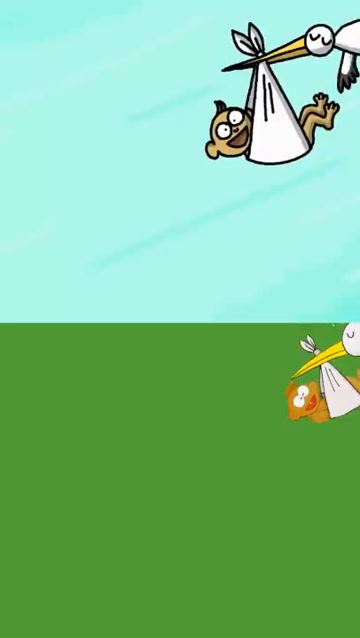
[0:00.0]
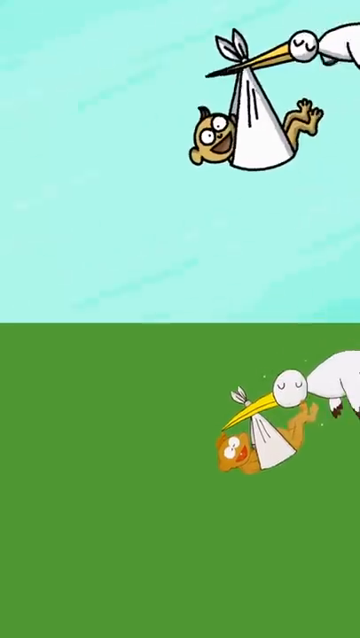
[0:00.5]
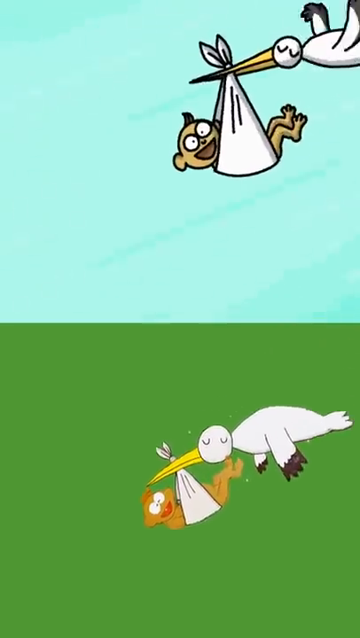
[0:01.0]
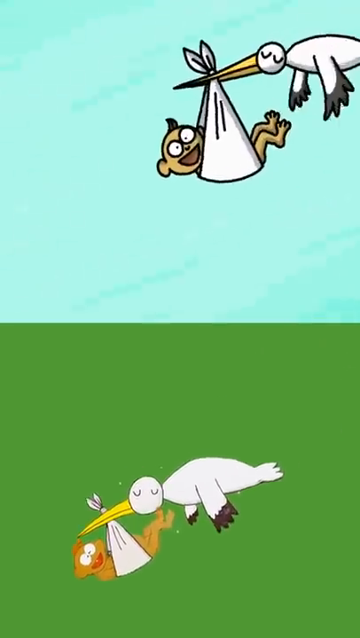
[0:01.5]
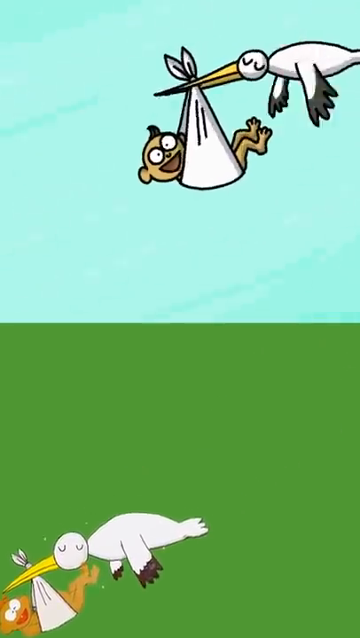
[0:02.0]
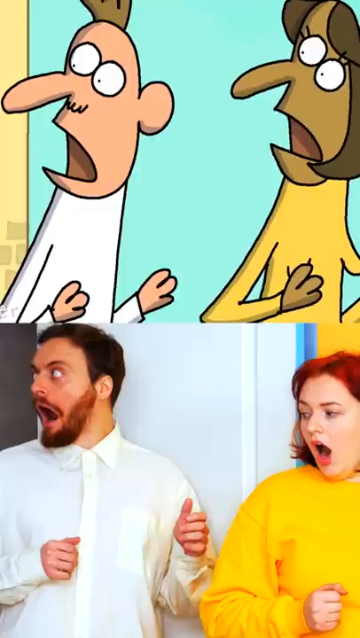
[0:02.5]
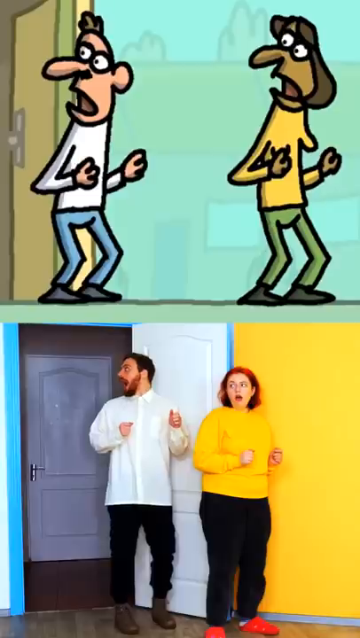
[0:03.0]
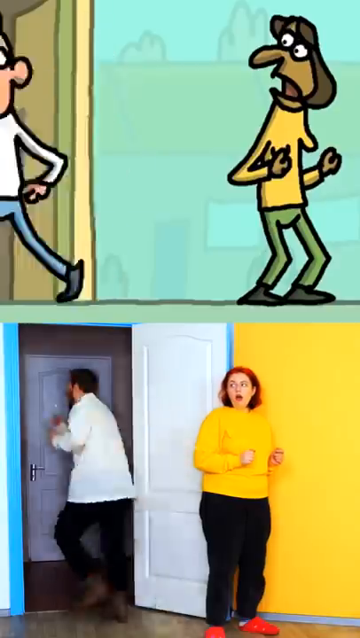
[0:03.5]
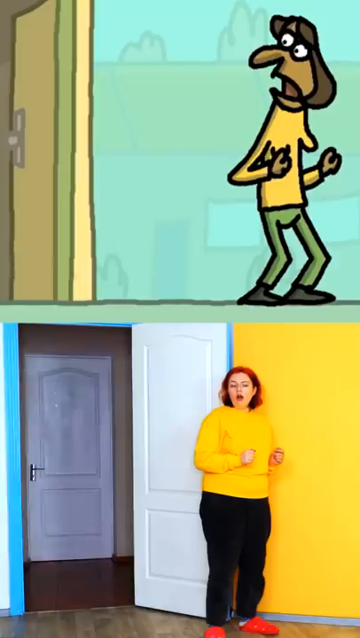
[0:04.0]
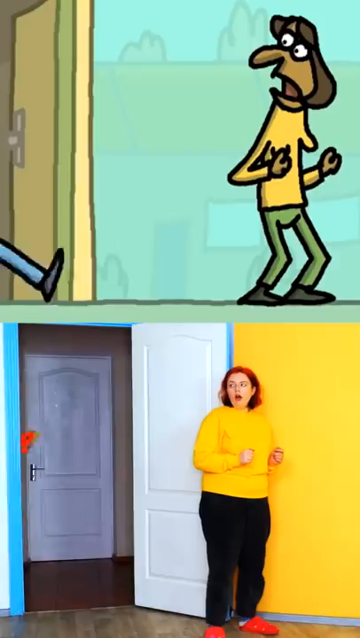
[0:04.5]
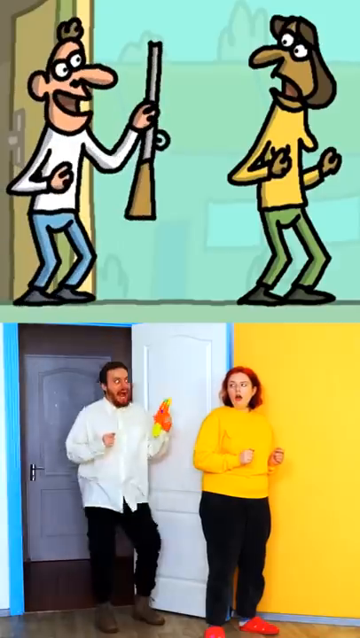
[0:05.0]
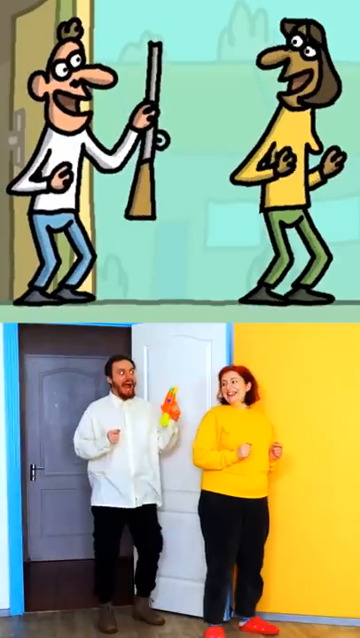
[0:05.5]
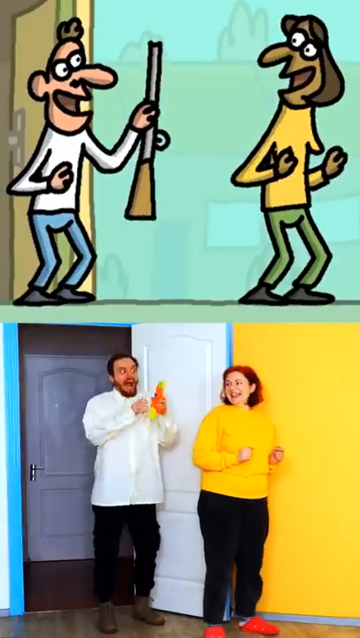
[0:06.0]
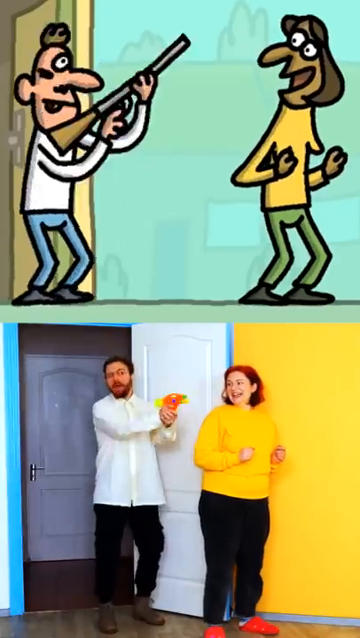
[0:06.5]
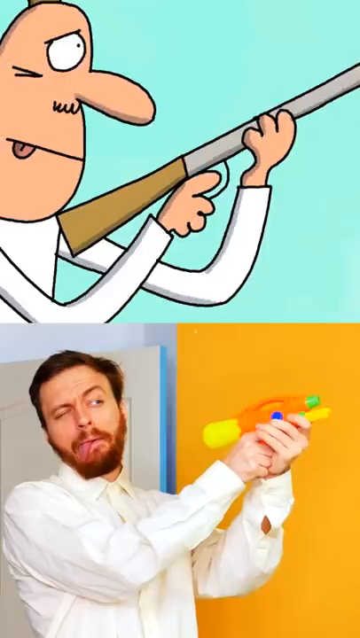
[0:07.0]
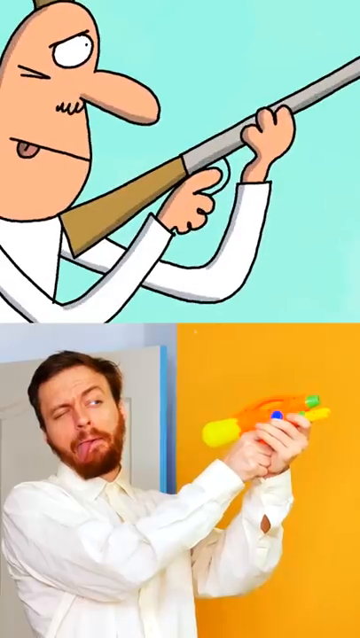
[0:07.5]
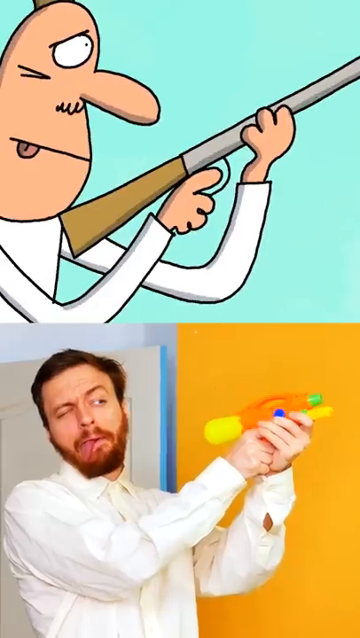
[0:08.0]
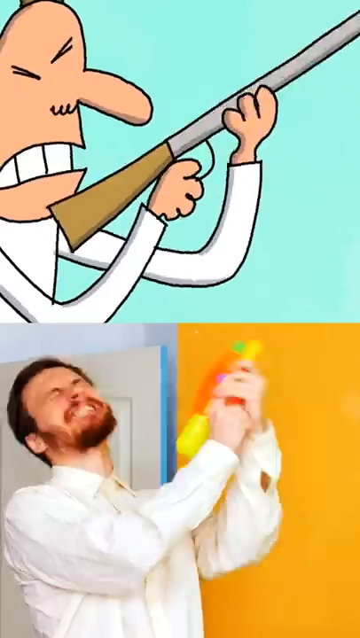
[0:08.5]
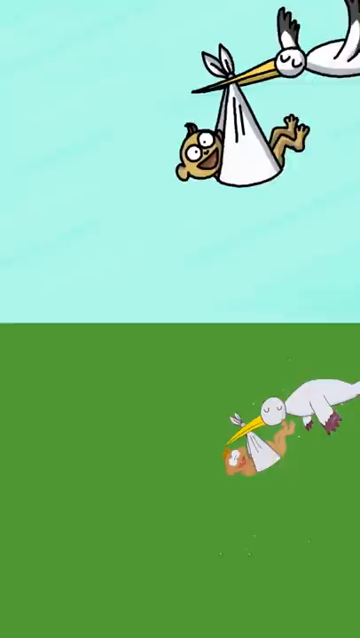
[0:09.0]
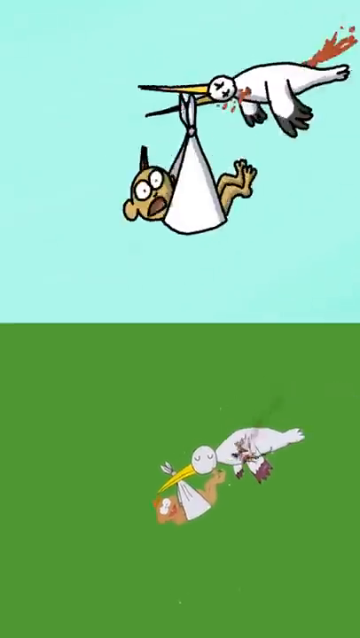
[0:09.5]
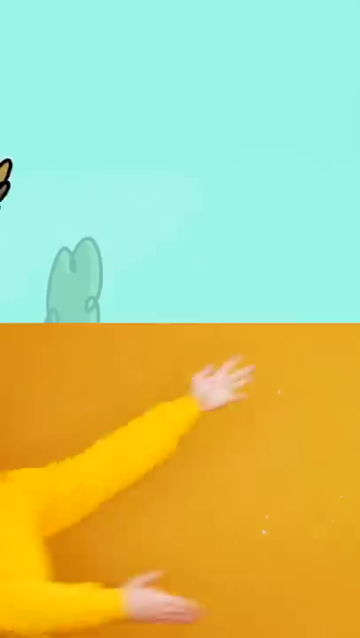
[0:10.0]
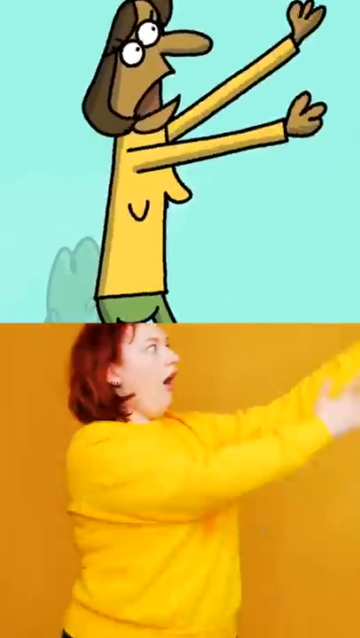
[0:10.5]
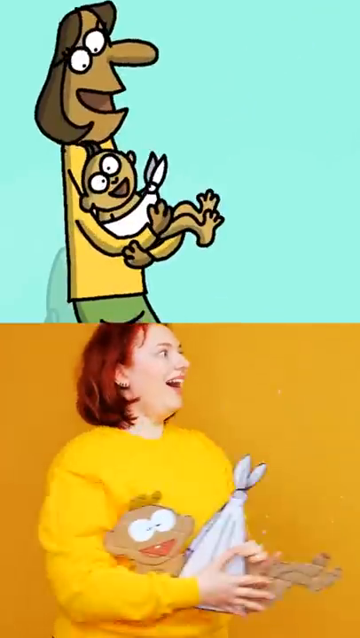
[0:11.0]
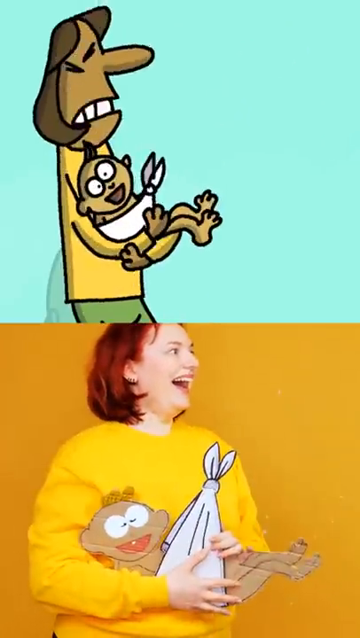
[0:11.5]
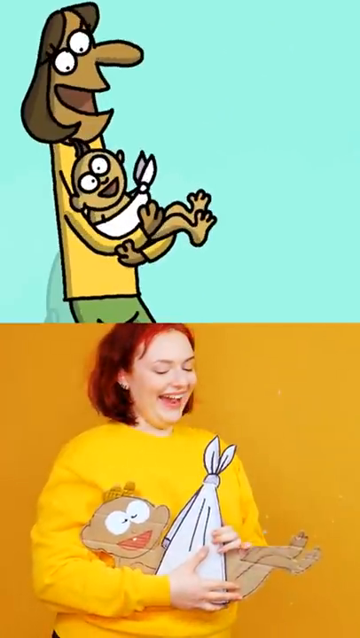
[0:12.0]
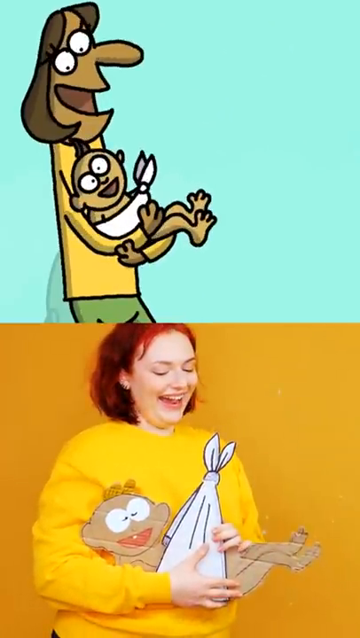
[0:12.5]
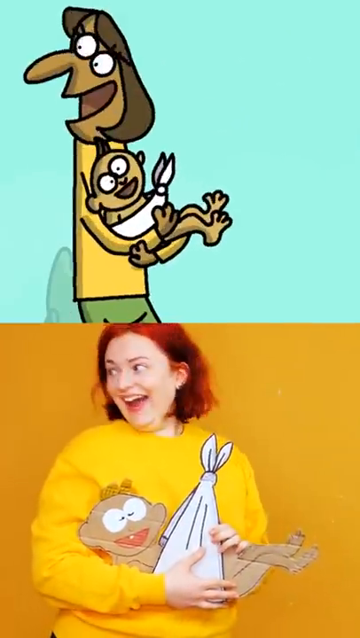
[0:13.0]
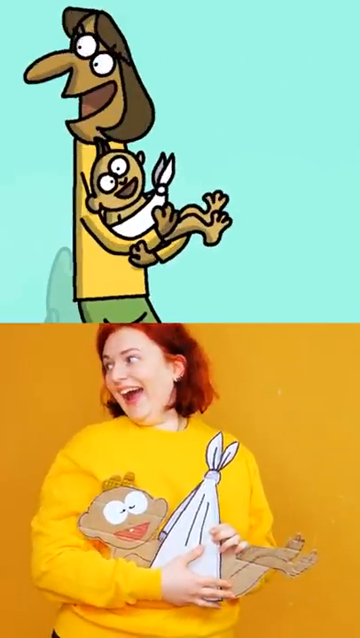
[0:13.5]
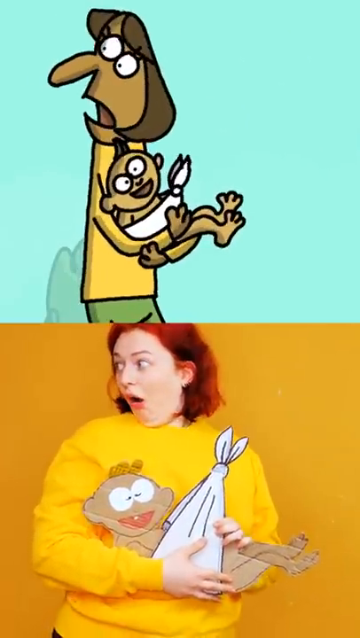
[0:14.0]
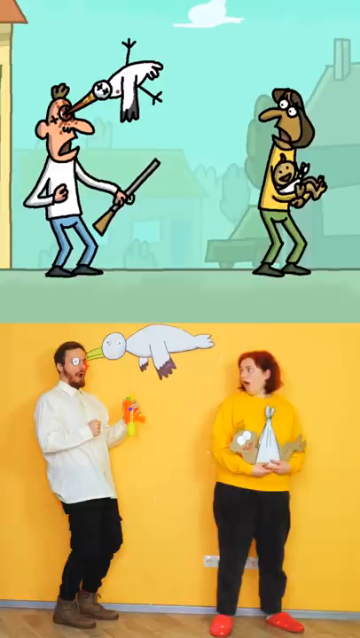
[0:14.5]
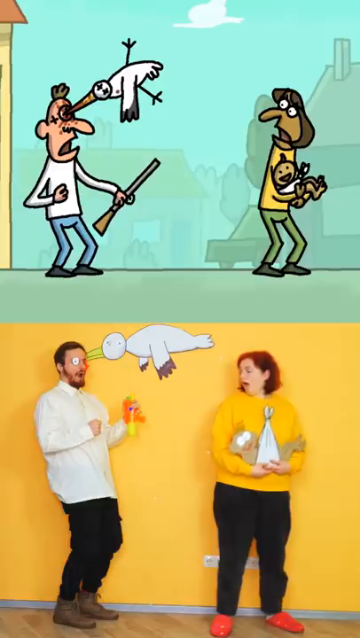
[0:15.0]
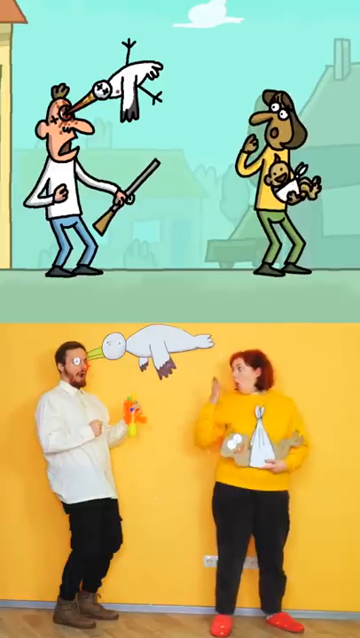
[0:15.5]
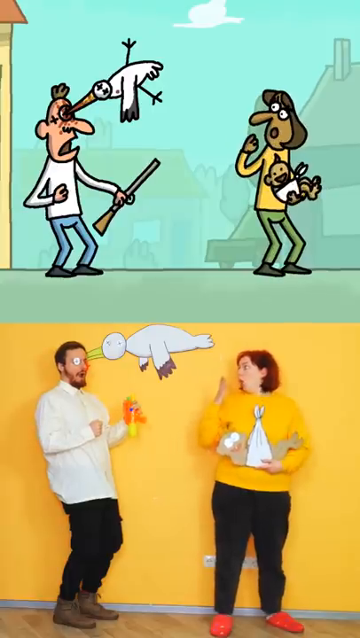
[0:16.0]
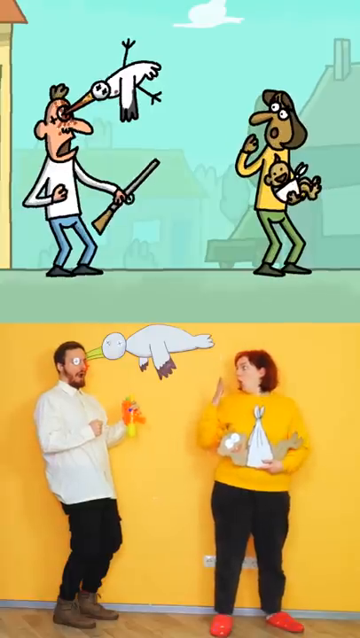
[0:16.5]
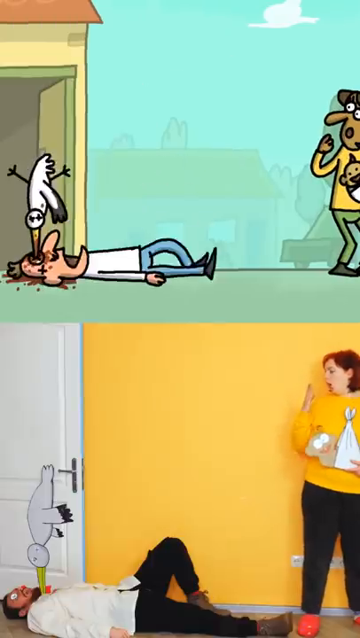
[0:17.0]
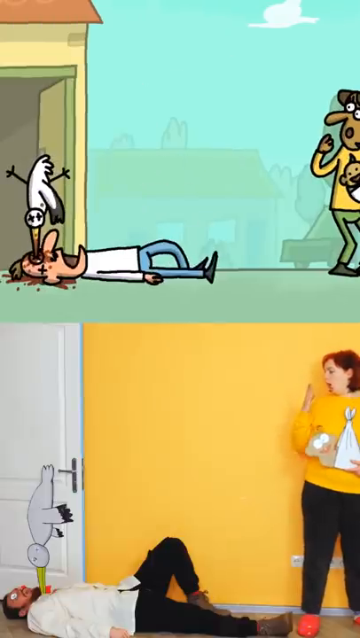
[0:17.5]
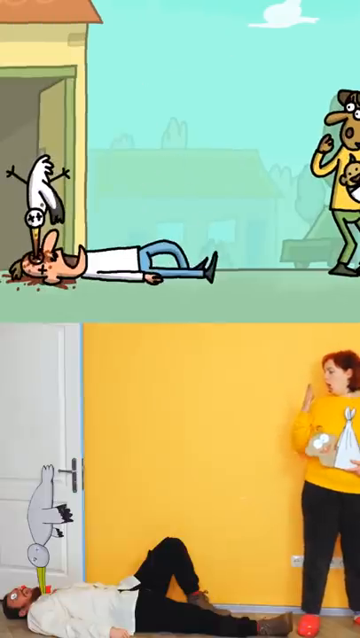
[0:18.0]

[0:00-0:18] The screen shows two different shots. The one on the bottom is an animation of a stork, while the one above shows a different animation of a stork coming down. A few seconds later, another shot appears with two panels: one shows an animated man holding a shotgun, and beneath it a real-life man holds what appears to be a toy gun, perhaps a water gun. Both men cock their guns and shoot, and the stork, a very large bird holding a knapsack with a child, is shot. In one panel an animated mother and in the other a real mother each hold what appears to be an animated baby, and both are smiling. In the next shot their expressions turn shocked as they see that their partner has been stabbed right through the eye by the stork he shot. Both the animated man and the real man then fall comically to the floor after succumbing to the dead stork's attack.